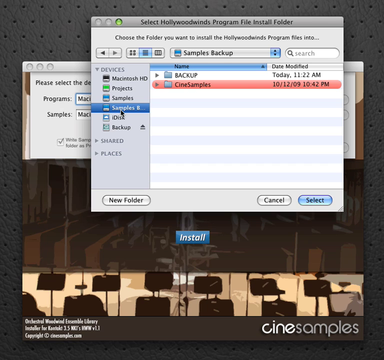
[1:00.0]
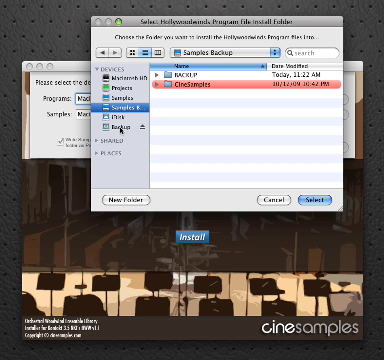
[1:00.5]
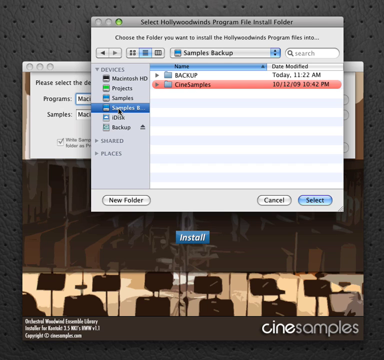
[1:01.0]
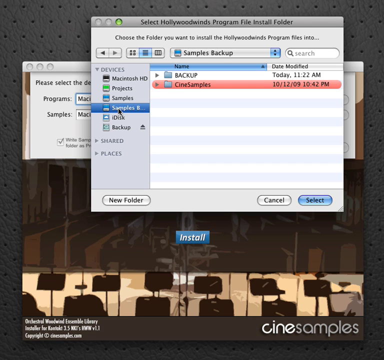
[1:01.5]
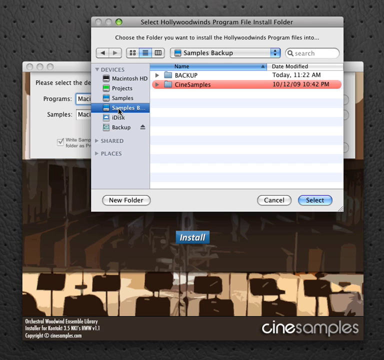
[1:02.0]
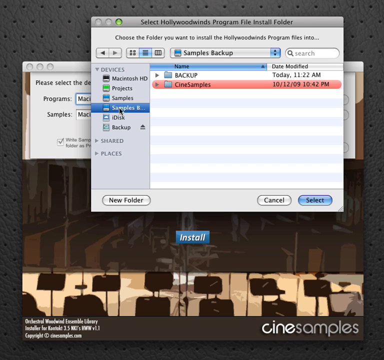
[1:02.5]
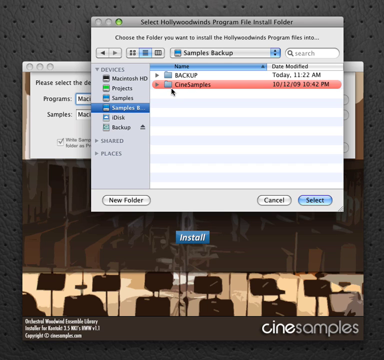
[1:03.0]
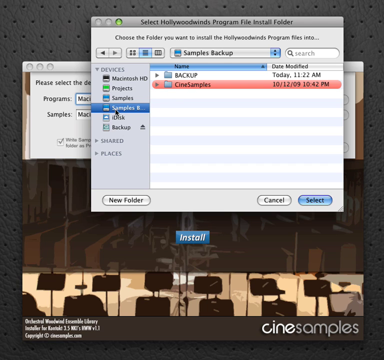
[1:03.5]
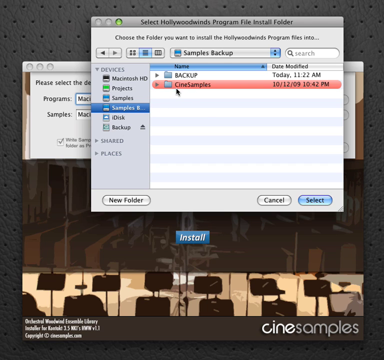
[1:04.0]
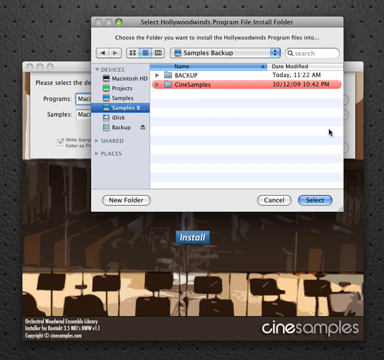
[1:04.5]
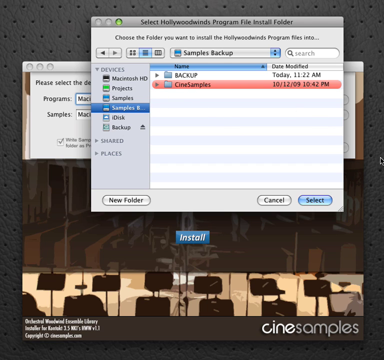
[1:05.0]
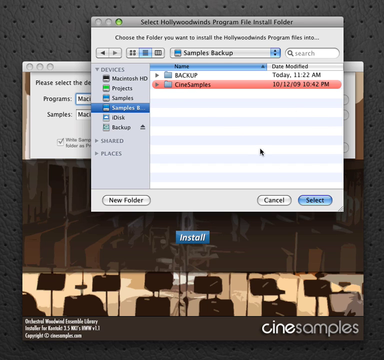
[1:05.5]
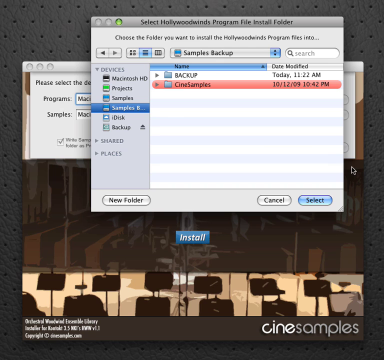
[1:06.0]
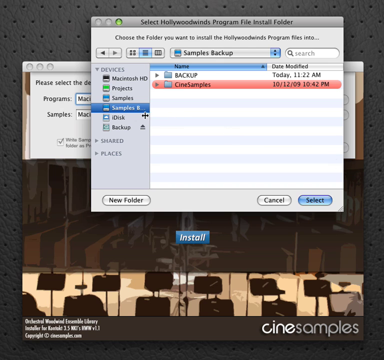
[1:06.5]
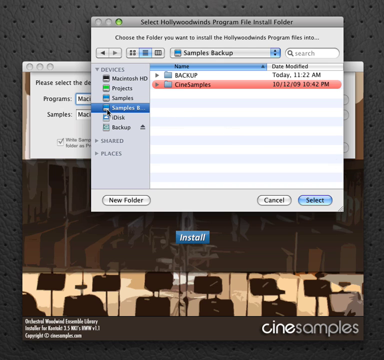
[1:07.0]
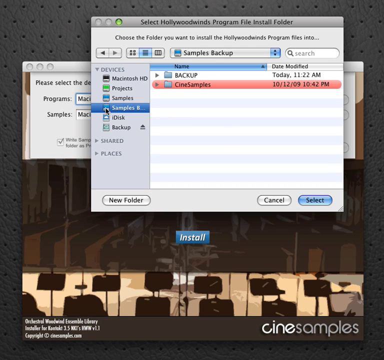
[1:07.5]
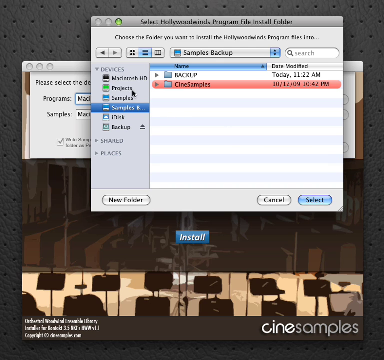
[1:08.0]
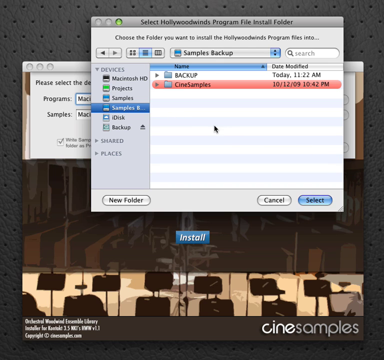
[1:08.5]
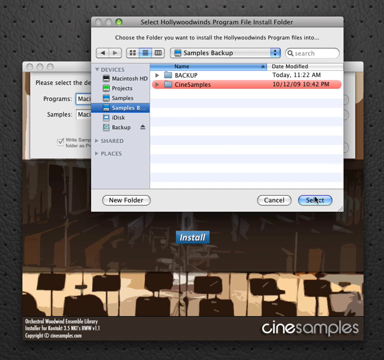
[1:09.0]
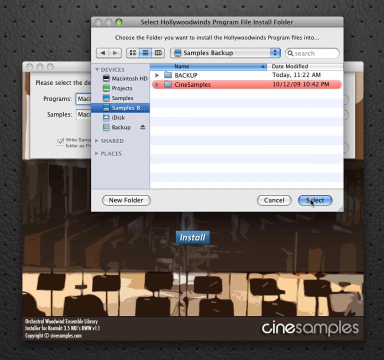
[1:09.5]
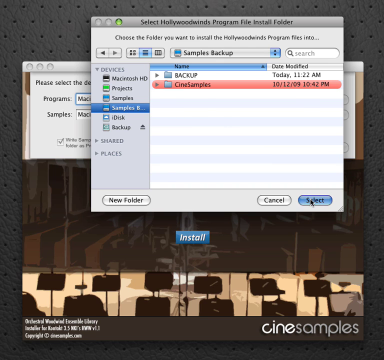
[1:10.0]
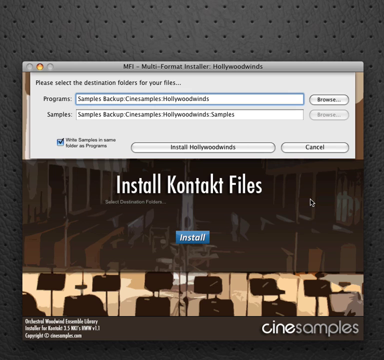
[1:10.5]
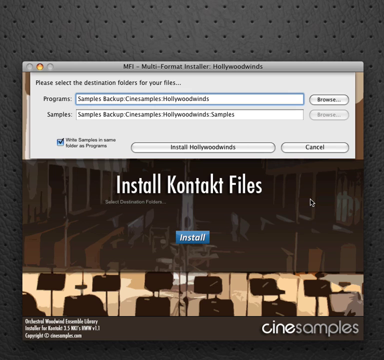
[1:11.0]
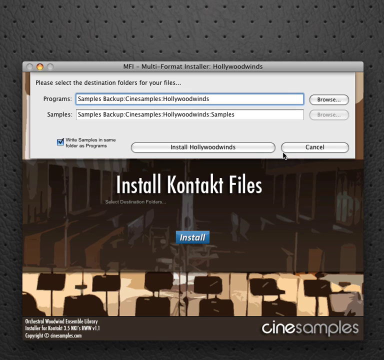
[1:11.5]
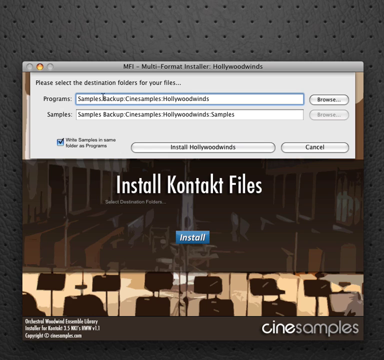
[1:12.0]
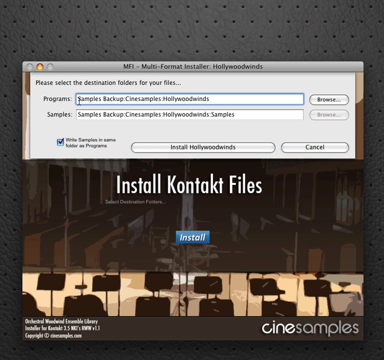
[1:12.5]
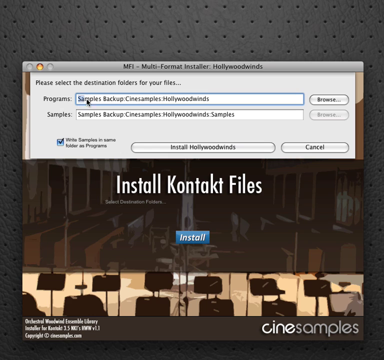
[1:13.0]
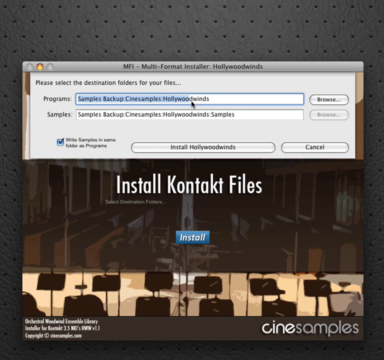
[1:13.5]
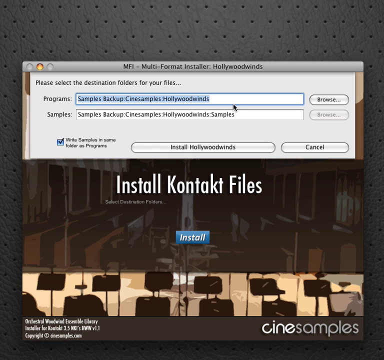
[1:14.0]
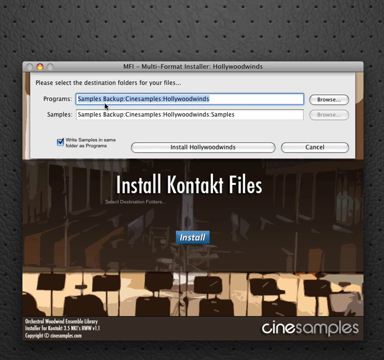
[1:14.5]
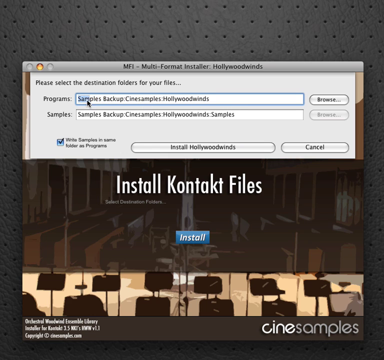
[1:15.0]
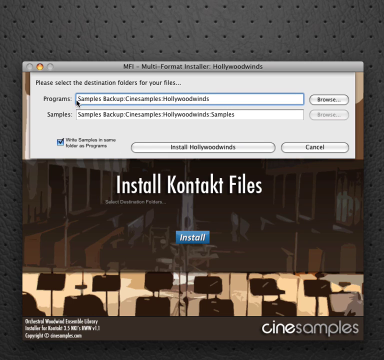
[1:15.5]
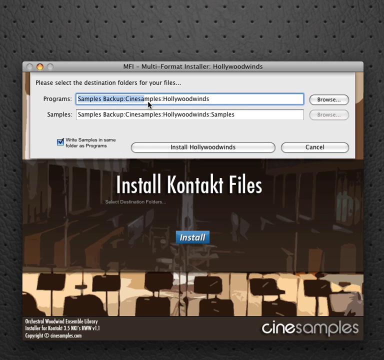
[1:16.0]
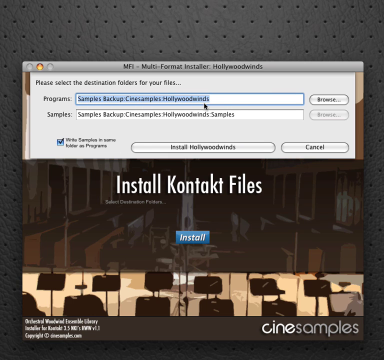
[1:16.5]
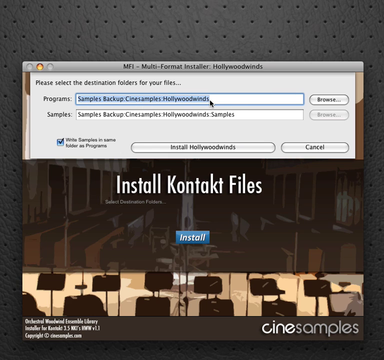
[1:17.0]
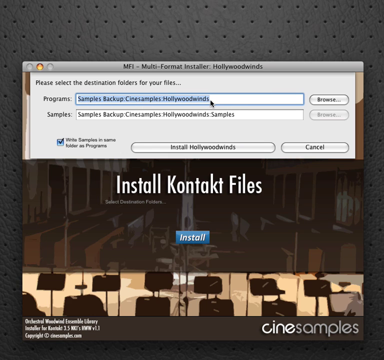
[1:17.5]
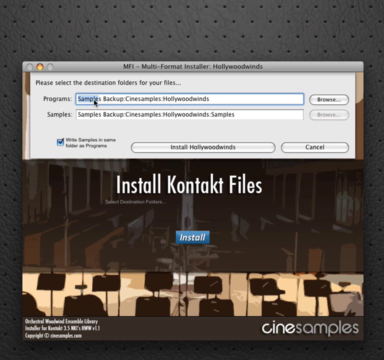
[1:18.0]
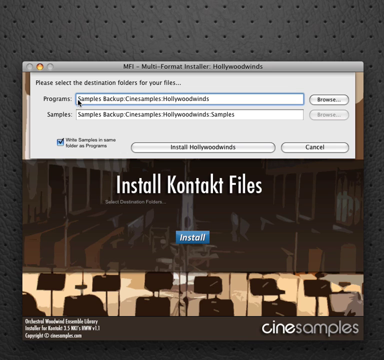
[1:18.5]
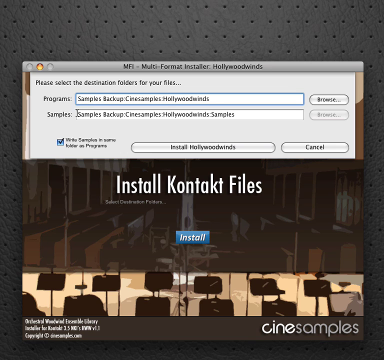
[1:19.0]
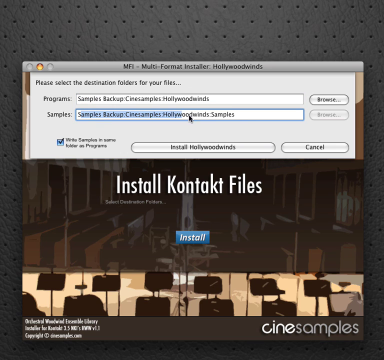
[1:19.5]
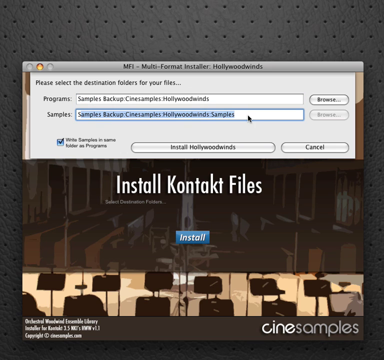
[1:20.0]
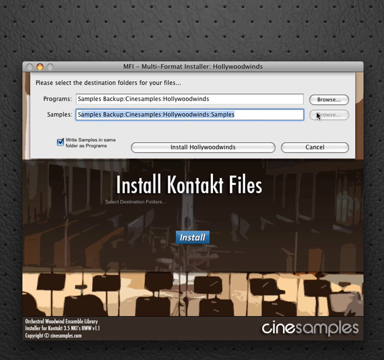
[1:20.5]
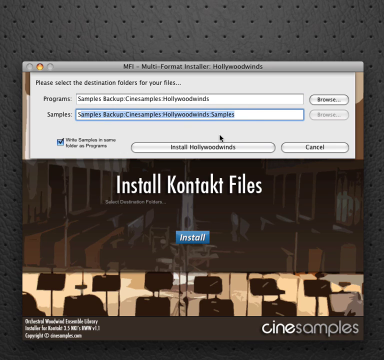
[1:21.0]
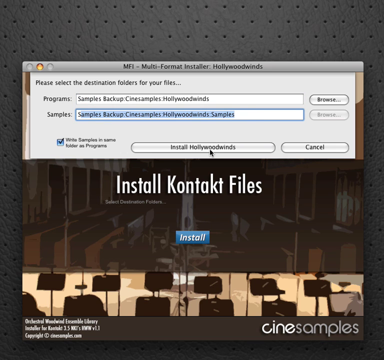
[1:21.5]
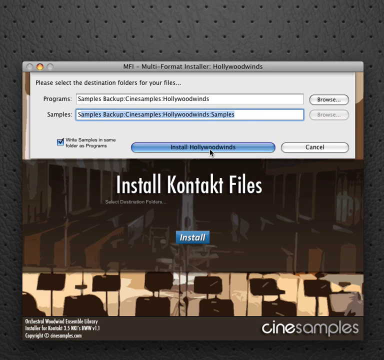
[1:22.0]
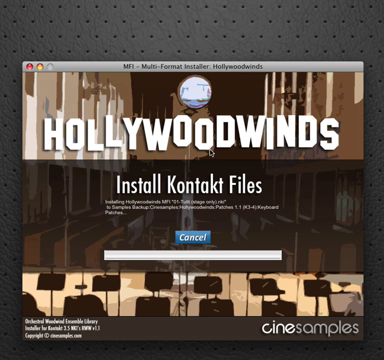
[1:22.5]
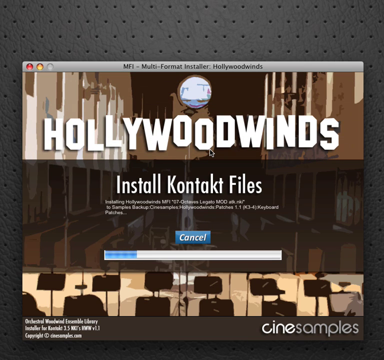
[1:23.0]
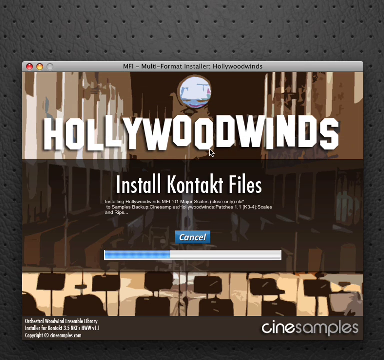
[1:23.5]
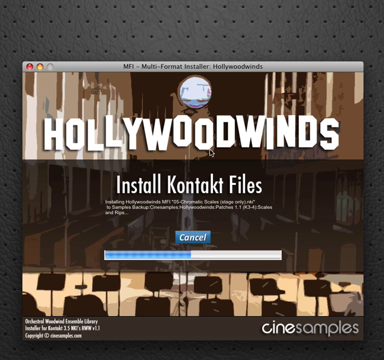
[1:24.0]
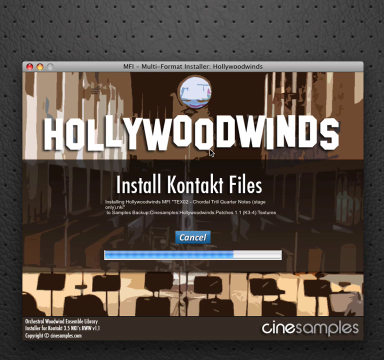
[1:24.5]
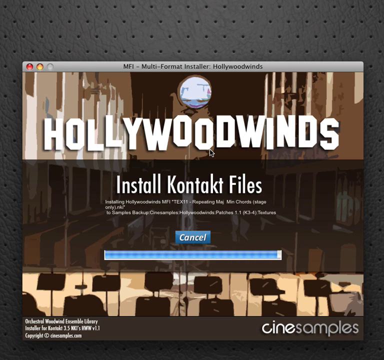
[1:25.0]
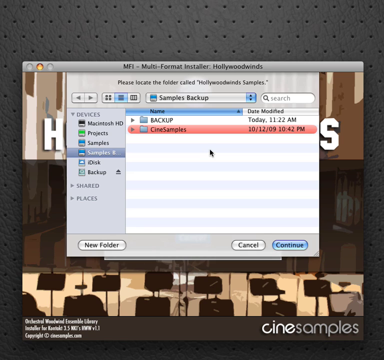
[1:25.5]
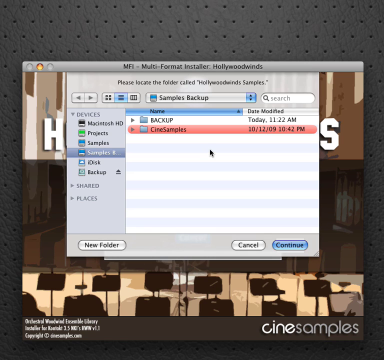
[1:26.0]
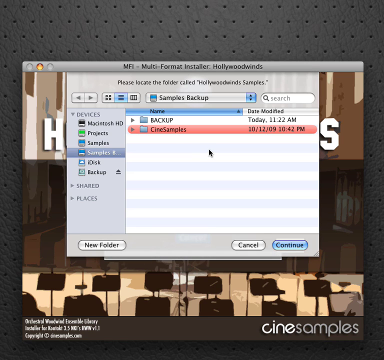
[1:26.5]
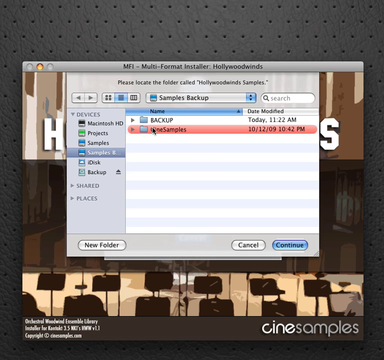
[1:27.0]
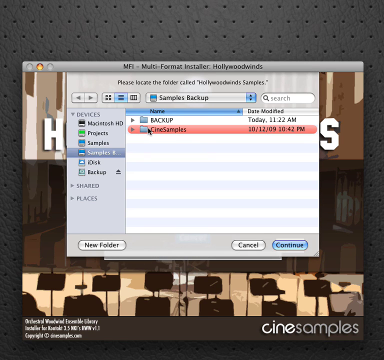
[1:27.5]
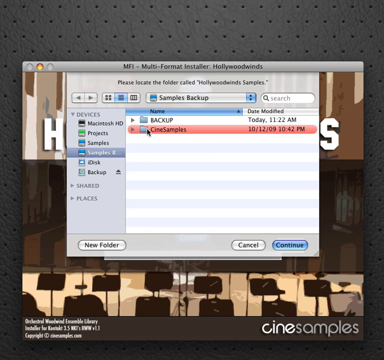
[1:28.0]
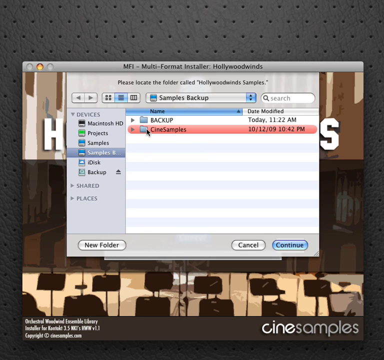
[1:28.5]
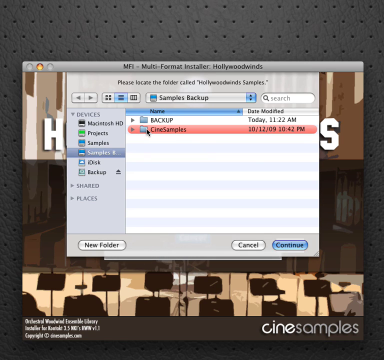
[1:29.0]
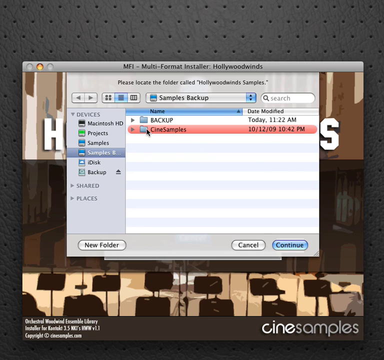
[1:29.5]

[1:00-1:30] The folder window reading "select Hollywood wins program file install folder" is shown with the names of the devices: Macintosh HD, projects, samples, samples, iDisc and backup. Two files appear, one called backup and the other Cine samples. The cursor hovers over samples, moves wildly around, goes back to samples, and hits select. The cursor then goes over two entries, labeled "samples, backup, Cine samples, Hollywood wins" and "samples, backup, Cine samples, Hollywood wins samples," and below them are "install Hollywood wins" and "cancel." The cursor first highlights the first entry, then stops and highlights the one below it instead. It hits install Hollywood wins, and the installation starts, with the text "install contact files" and a bar showing the file installing. A drop-down showing the devices and file names comes down, and the cursor hovers over Cine samples. When it is clicked, a large list comes down with files including sign harp, Cine samples, swing brushes, swing snacks, sign toms, drums of war, Hollywood winds and iron gutters.